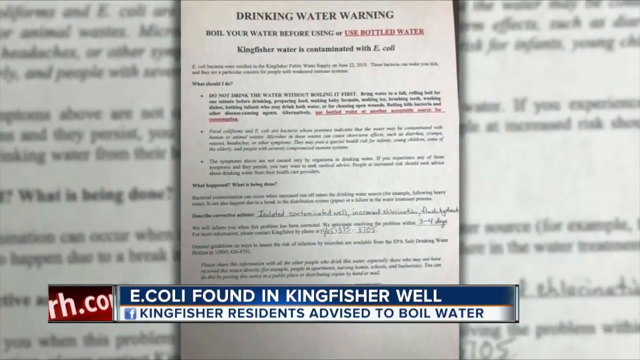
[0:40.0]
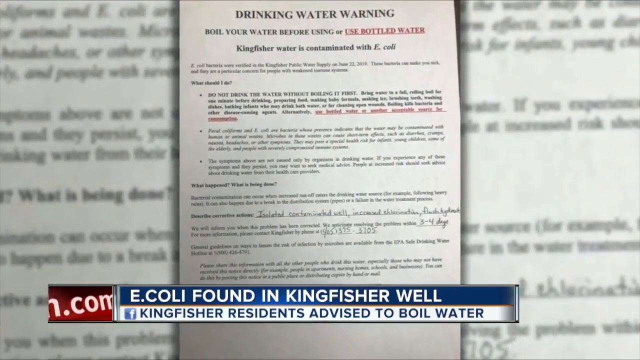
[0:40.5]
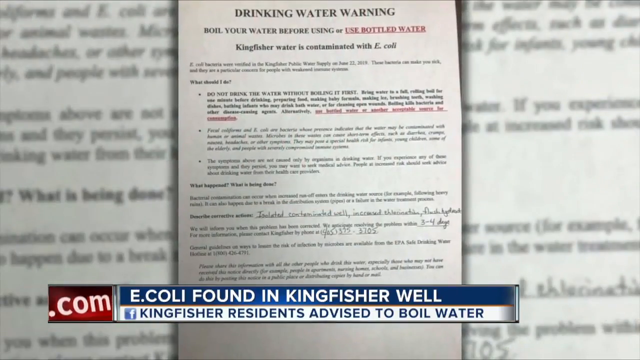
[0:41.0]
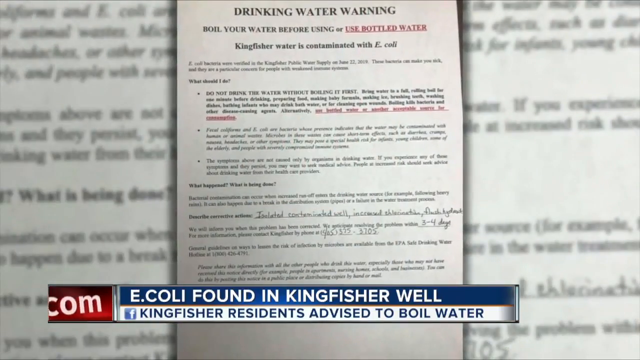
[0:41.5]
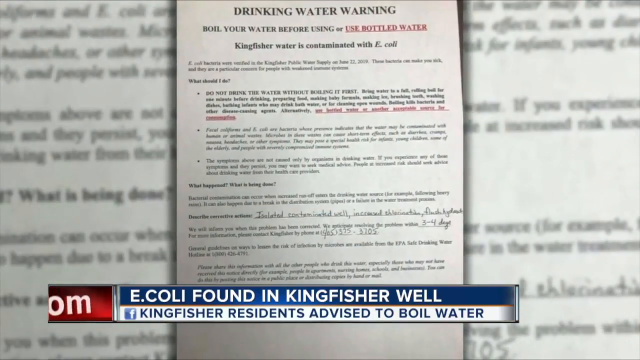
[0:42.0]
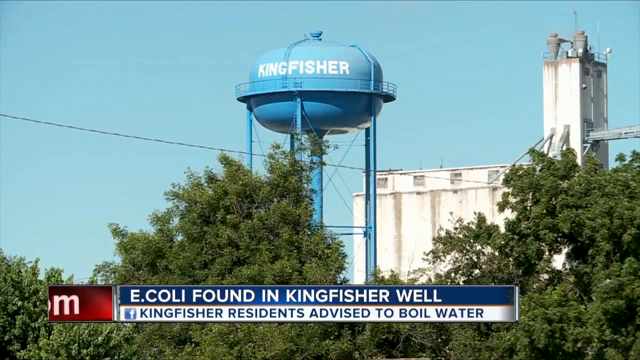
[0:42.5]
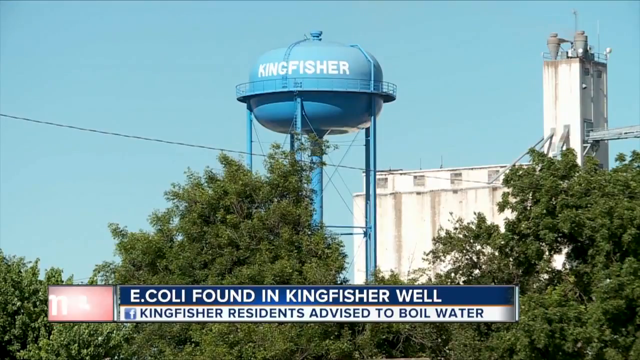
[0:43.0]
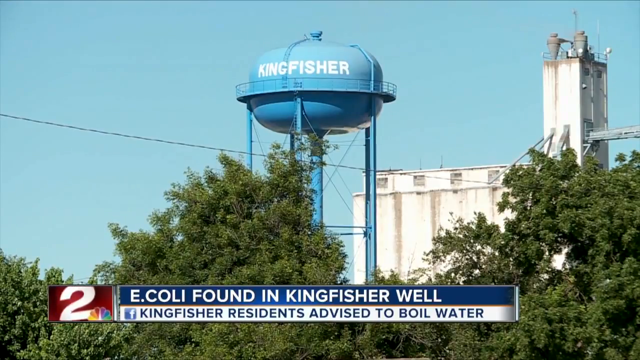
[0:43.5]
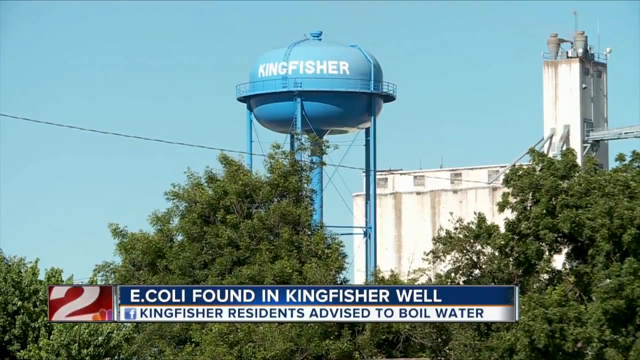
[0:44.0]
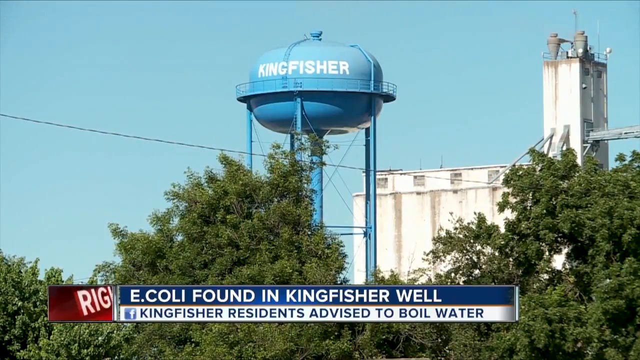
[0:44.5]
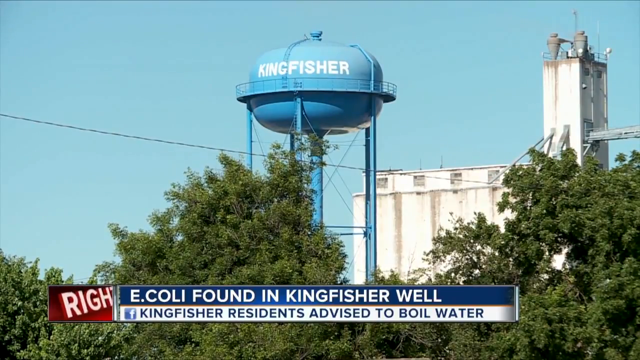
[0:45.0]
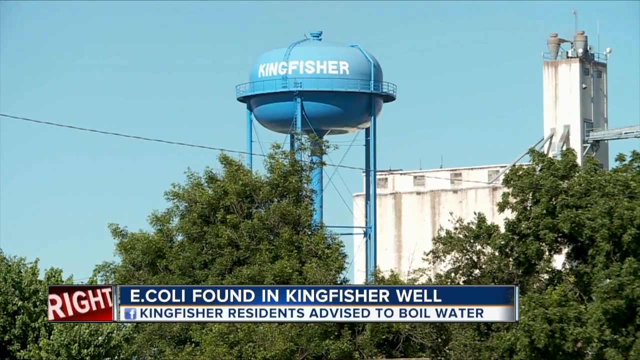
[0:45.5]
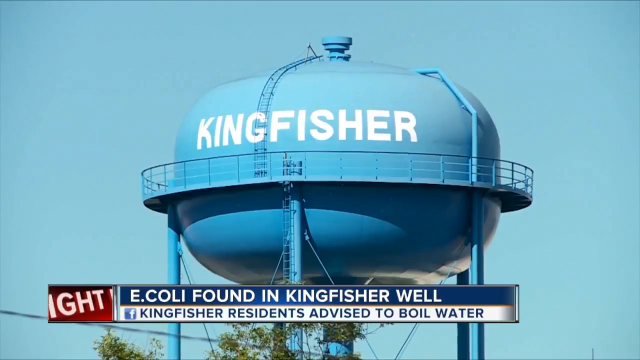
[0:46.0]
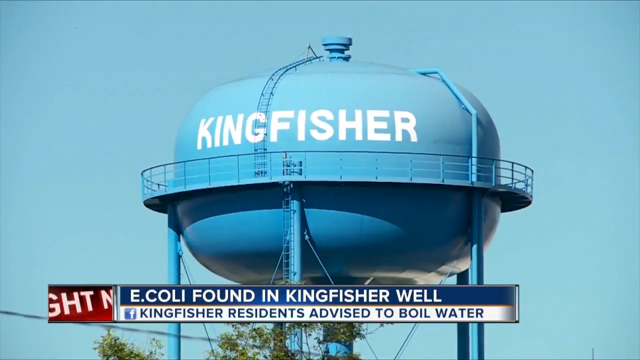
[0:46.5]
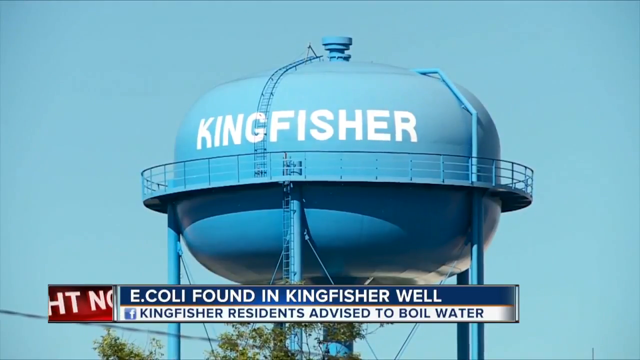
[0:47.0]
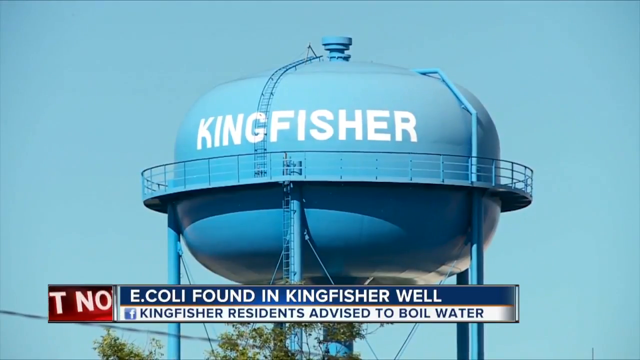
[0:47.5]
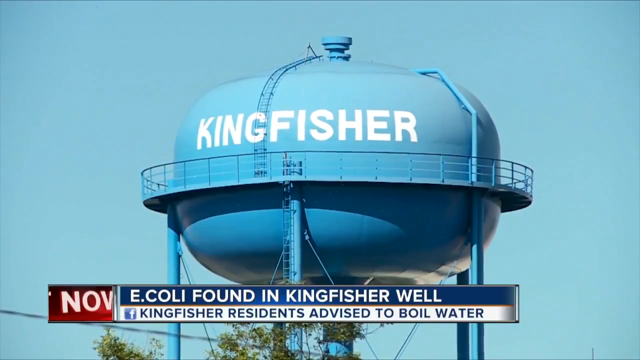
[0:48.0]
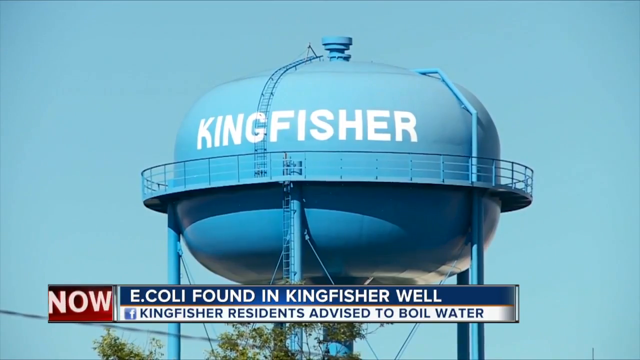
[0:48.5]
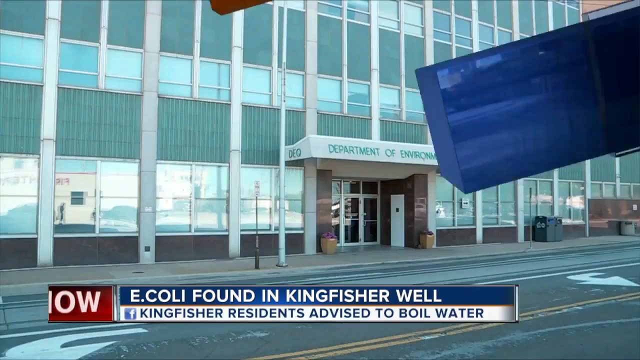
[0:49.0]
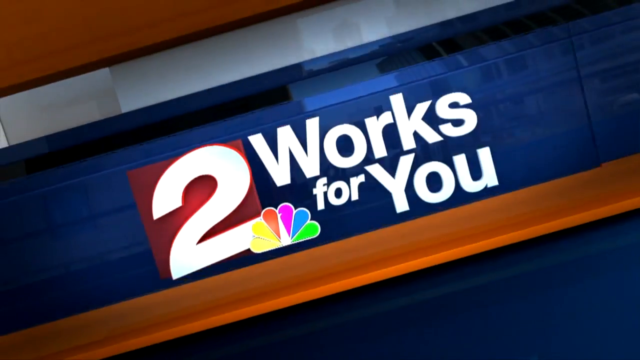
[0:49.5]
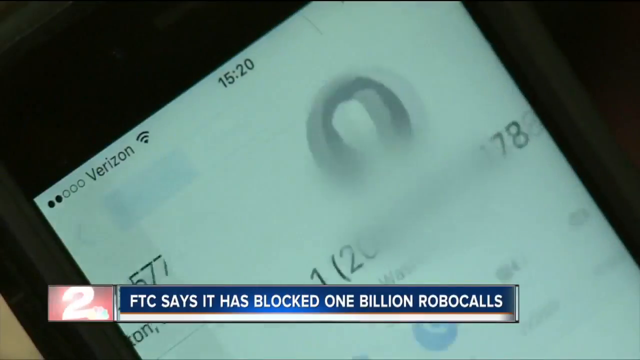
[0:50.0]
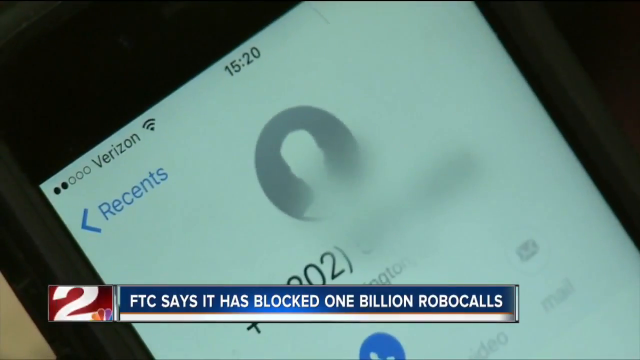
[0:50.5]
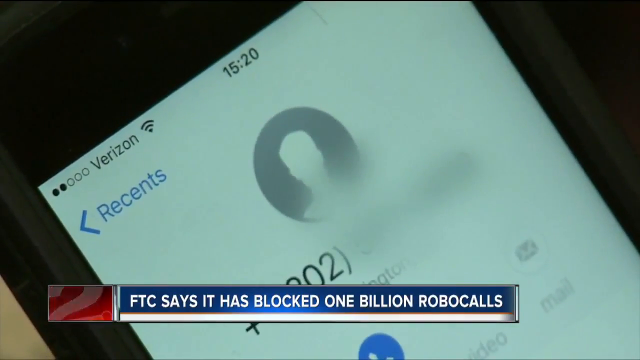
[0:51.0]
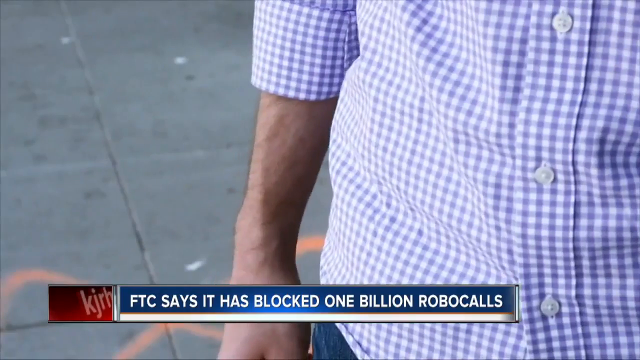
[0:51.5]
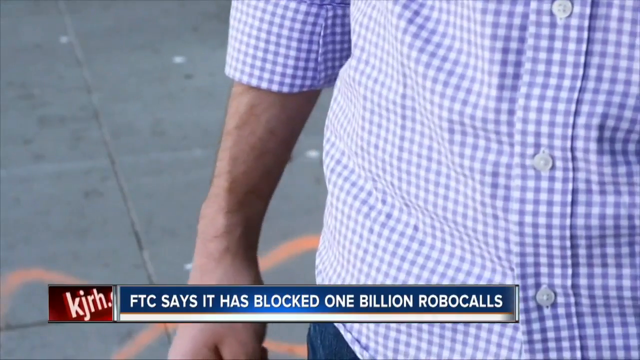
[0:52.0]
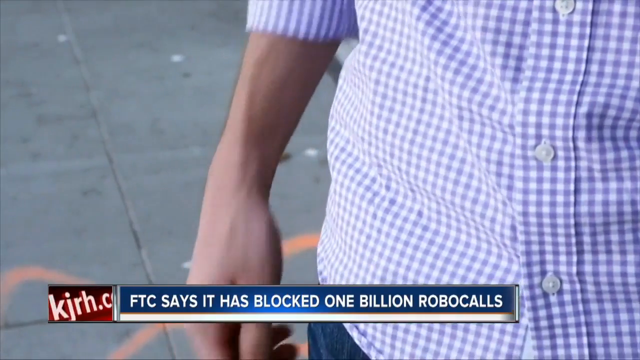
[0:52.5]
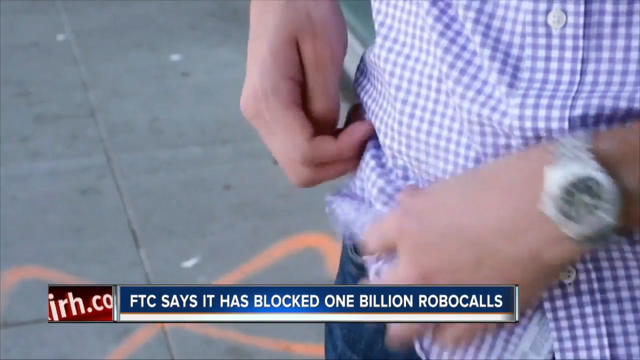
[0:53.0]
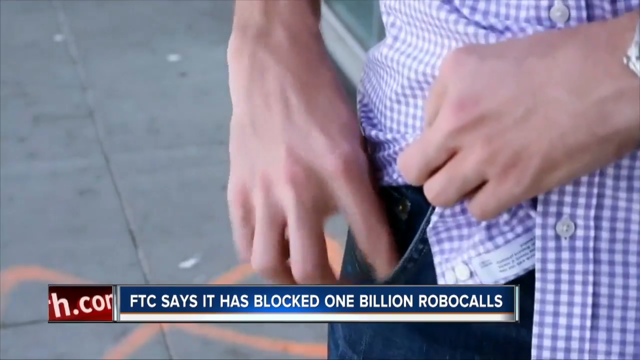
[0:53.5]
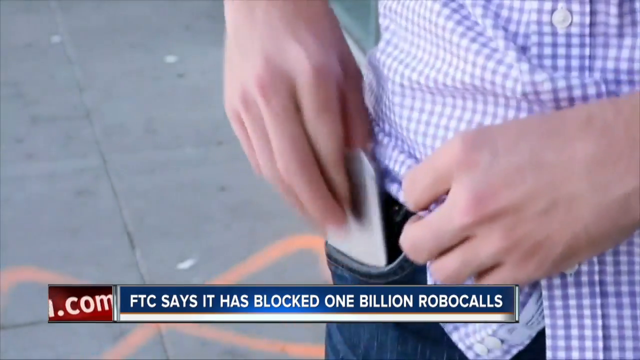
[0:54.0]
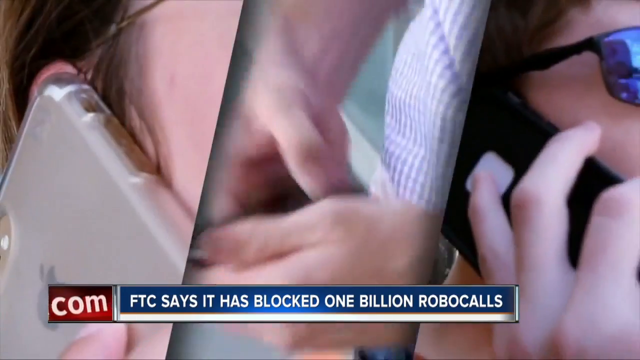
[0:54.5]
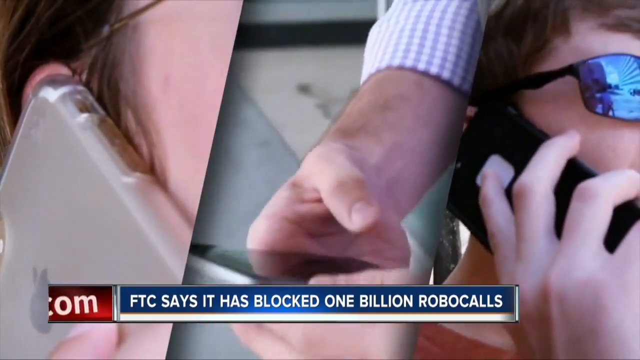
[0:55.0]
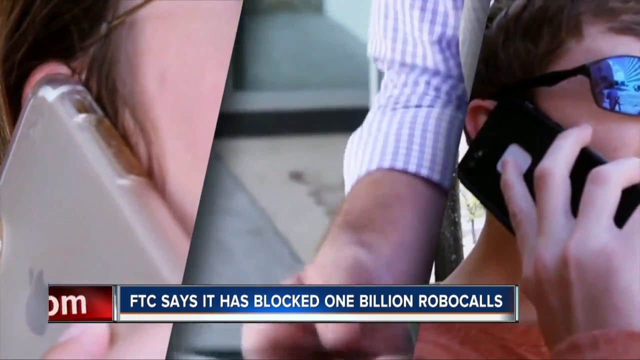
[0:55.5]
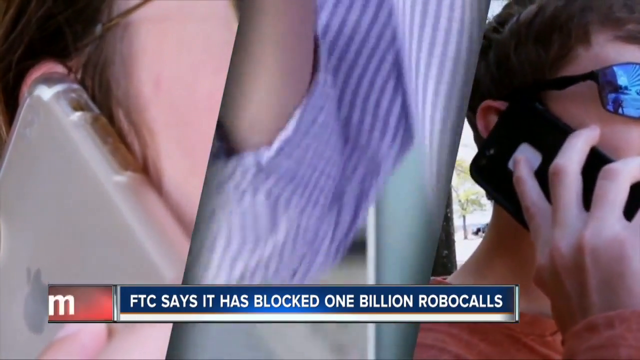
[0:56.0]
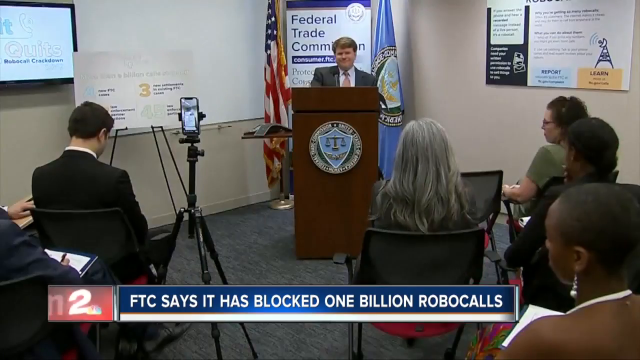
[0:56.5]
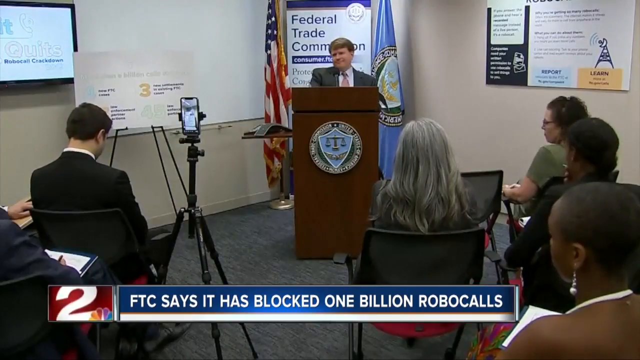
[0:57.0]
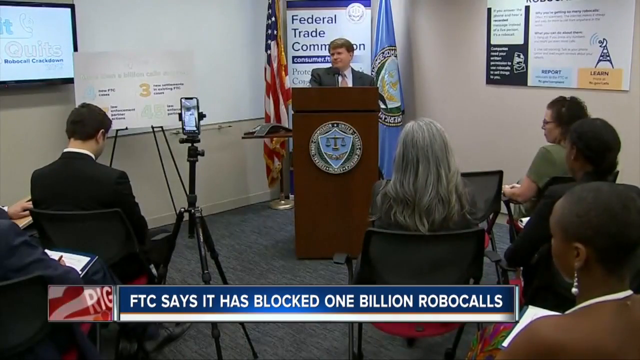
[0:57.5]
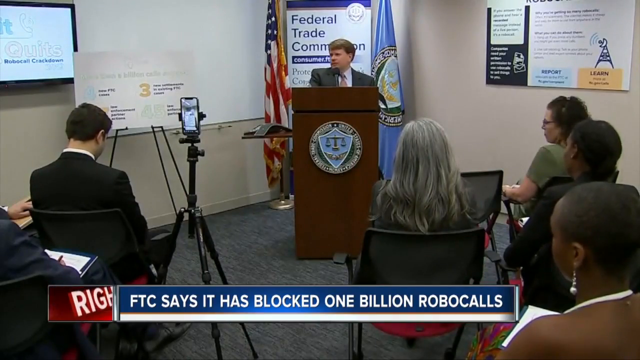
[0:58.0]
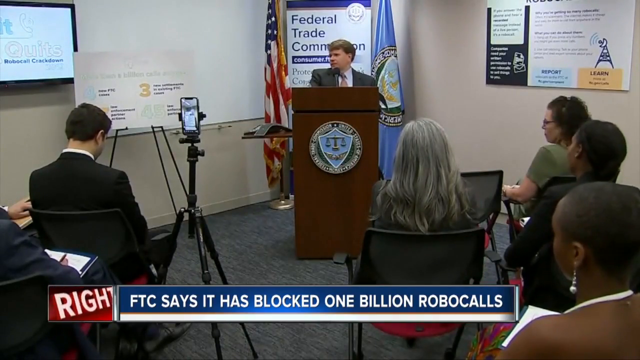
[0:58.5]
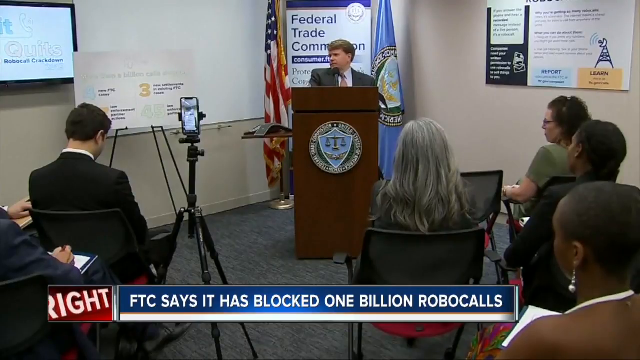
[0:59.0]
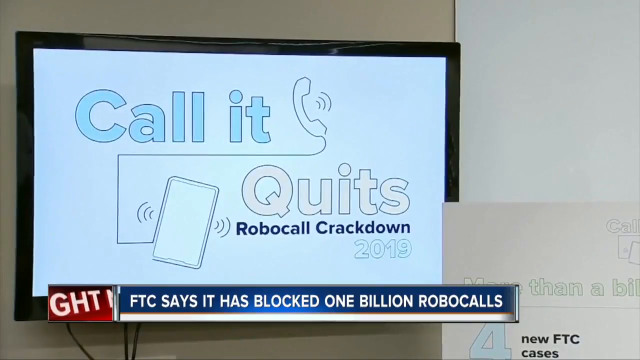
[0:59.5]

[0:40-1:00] A document reads "drinking water warning, boil your water before drinking," and the caption at the bottom reads "E. coli found in Kingfisher well. Kingfisher residents advise to boil water." A blue water tower appears with "Kingfisher" written on it in white, an industrial building, some kind of plant, behind it, and a bunch of trees around its base. A close-up shows "Kingfisher" on the tower. The "two Works4U" graphic flashes quickly before a cut to a close-up of a cell phone showing it is connected to a Verizon network. The caption at the bottom reads "FTC says it has blocked one billion robocalls." A man reaches into his pocket for his cell phone, and other shots show people holding cell phones to their ears. The scene cuts to a man standing at a wooden podium, apparently speaking to the press, with a sign behind him reading "Federal Trade Commission." He has light brown hair and wears a charcoal suit with a light brown button-up shirt and a tie, maybe beige. An American flag is behind him on one side and a flag with another emblem on the other. An audience in business attire sits with their backs to the camera listening: a Caucasian man in a suit up front, a woman with long gray hair, a woman with short brown hair, and what look like two African-American women, both with short hair. A pop-up, looking like it is on a TV screen, reads "Call It Quits Robocall Crackdown 2019" with an image of a phone handset and a cell phone.